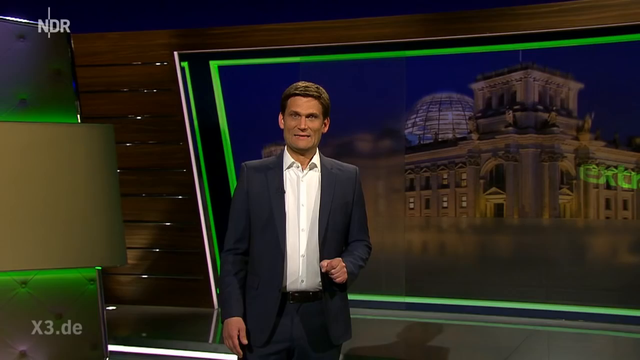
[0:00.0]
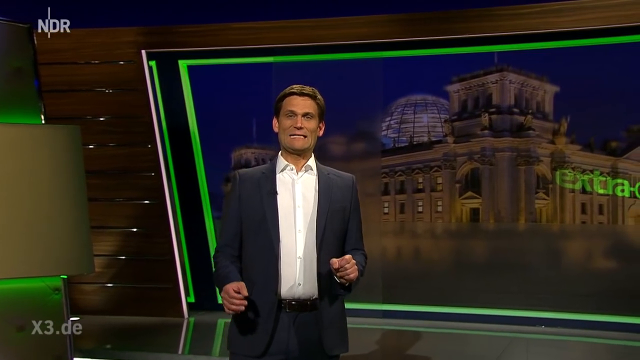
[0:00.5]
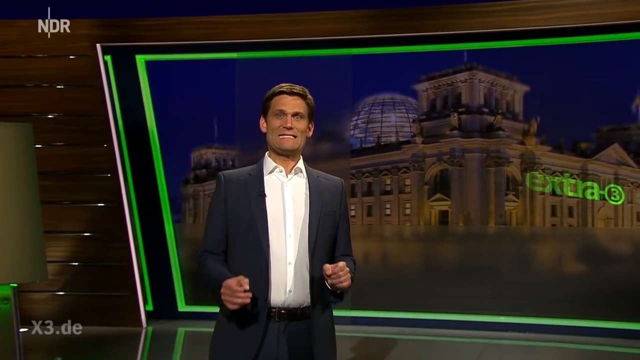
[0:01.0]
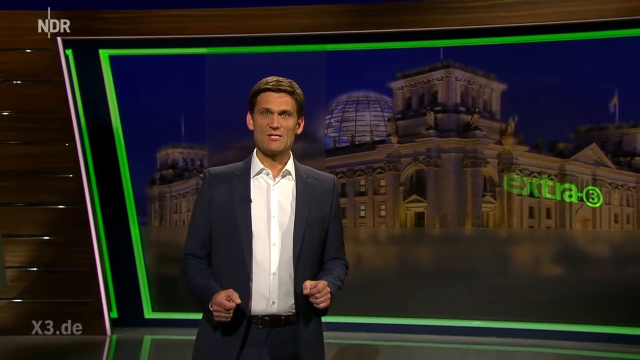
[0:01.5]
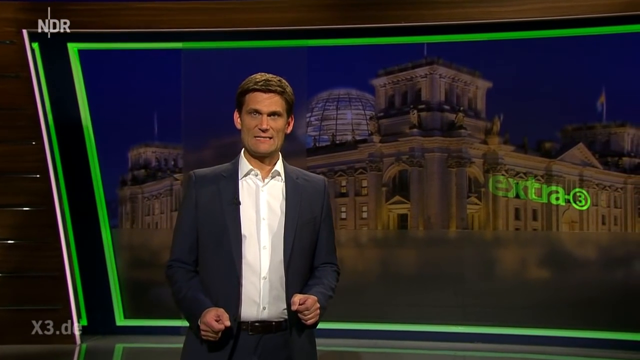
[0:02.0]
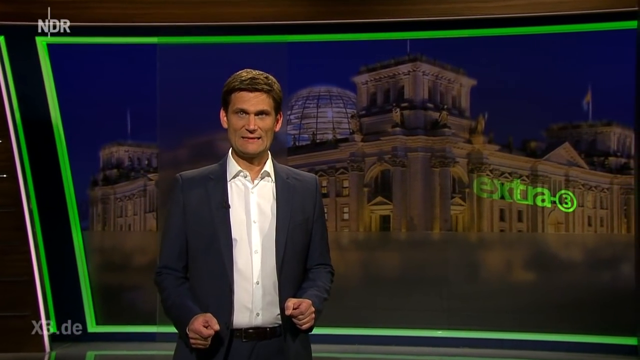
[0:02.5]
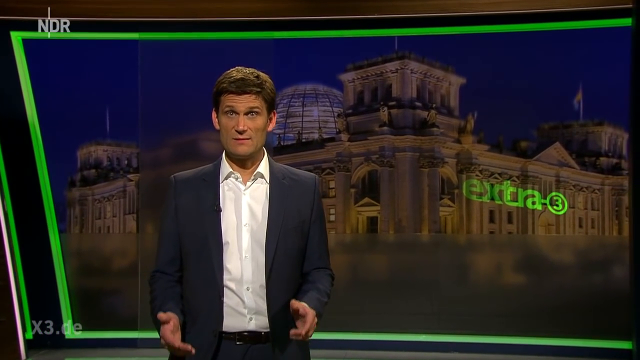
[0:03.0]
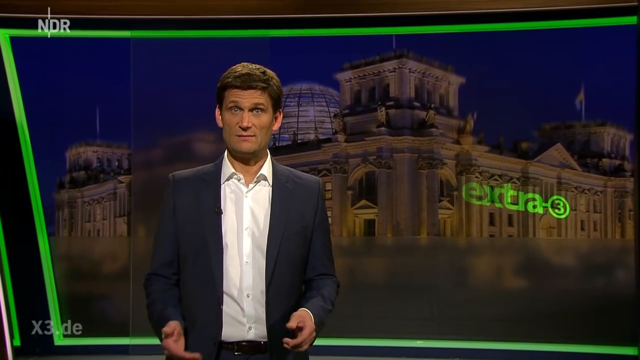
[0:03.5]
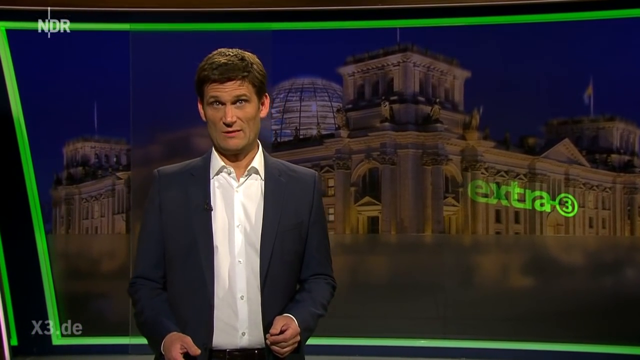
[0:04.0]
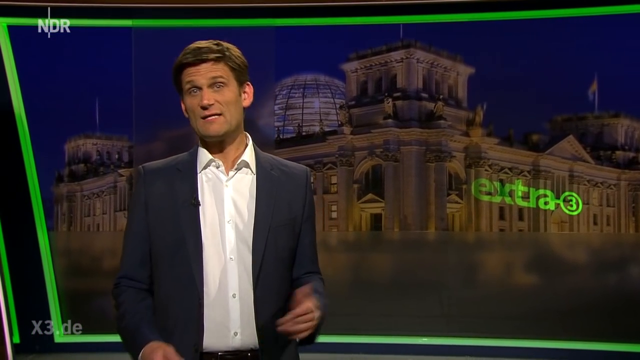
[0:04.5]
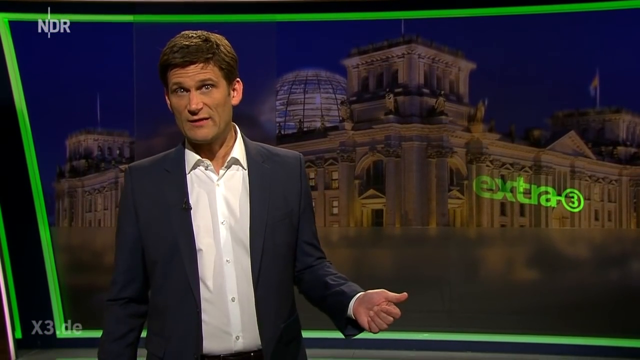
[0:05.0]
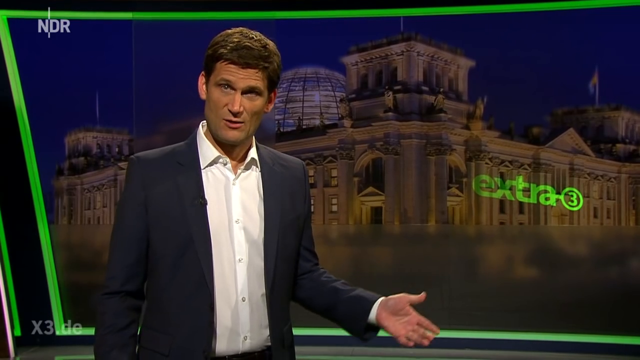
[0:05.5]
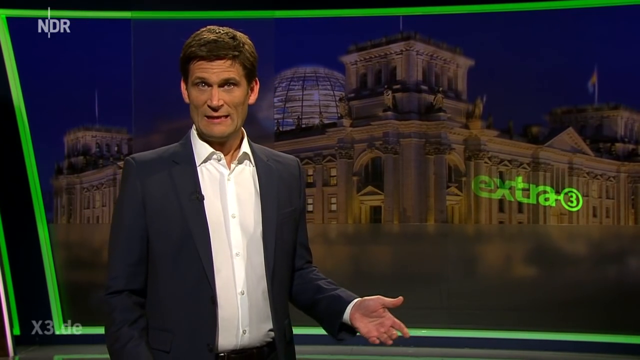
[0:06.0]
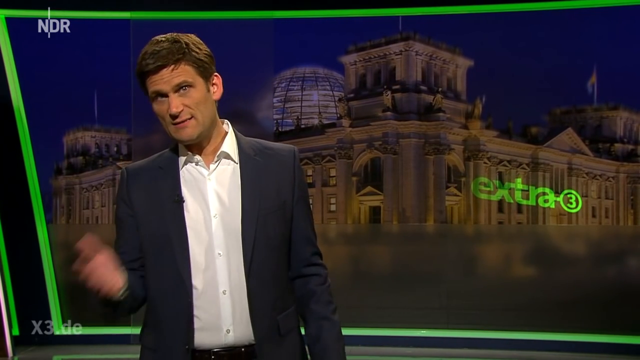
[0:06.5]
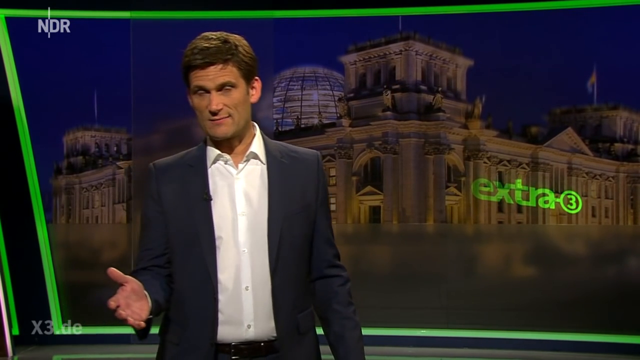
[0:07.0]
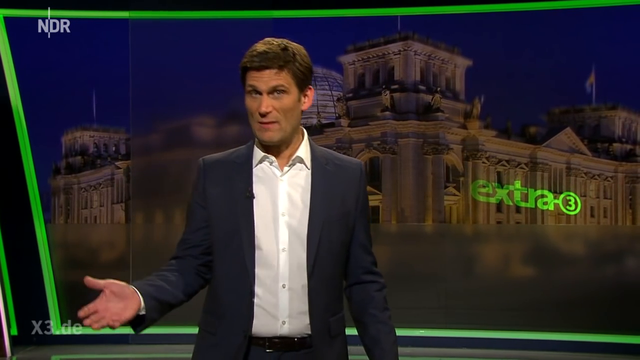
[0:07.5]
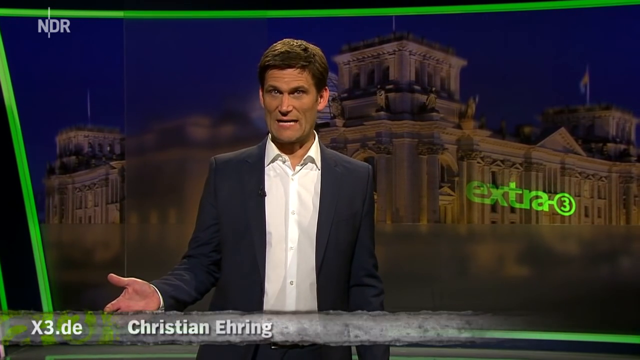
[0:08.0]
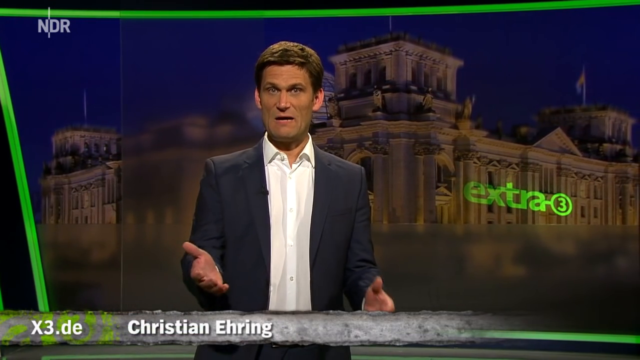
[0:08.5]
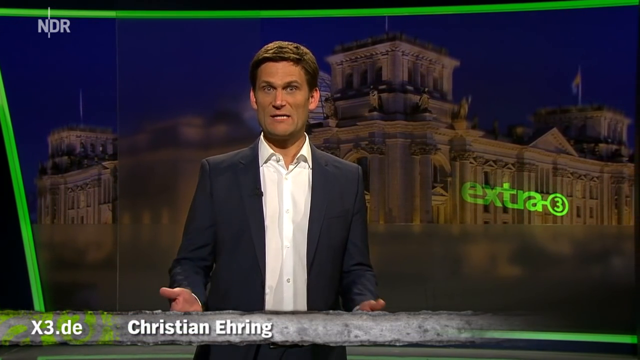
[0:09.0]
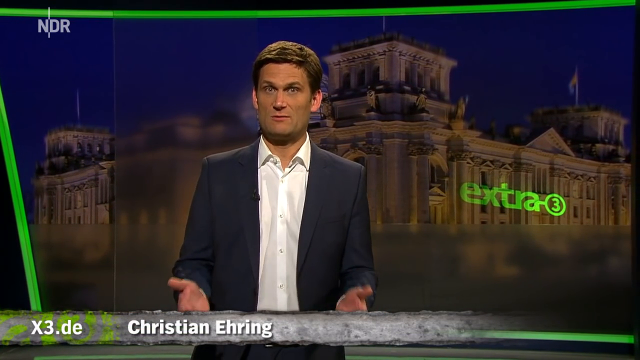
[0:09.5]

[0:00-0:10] In the upper left corner, white text reads "NDR". A man wears a black suit with no tie over a white button-down collared shirt, and he is talking. As he talks, he kind of holds a fist in each hand and lifts them up, then opens his palms, one hand and then the other. His name then pops up on screen: "Christian Ehring".